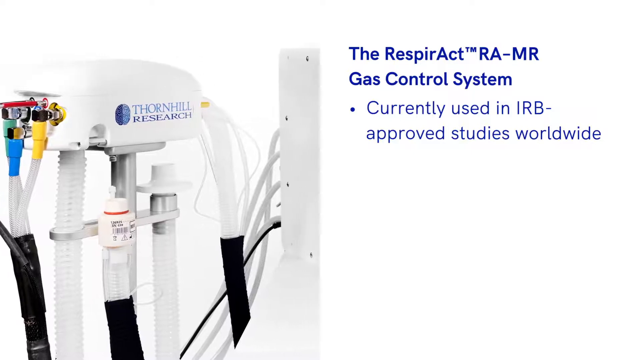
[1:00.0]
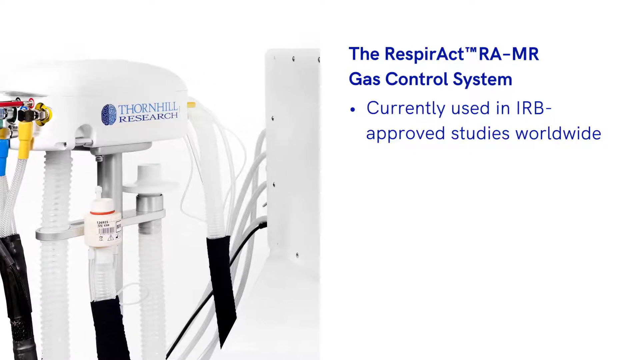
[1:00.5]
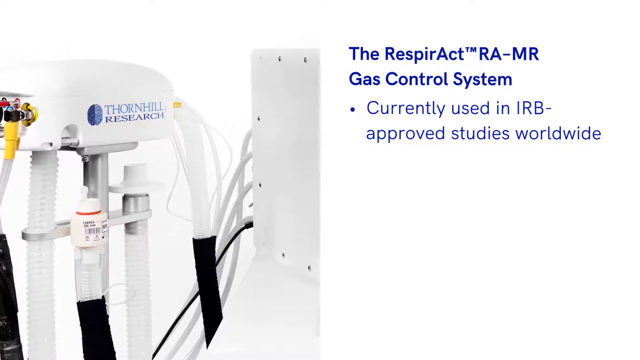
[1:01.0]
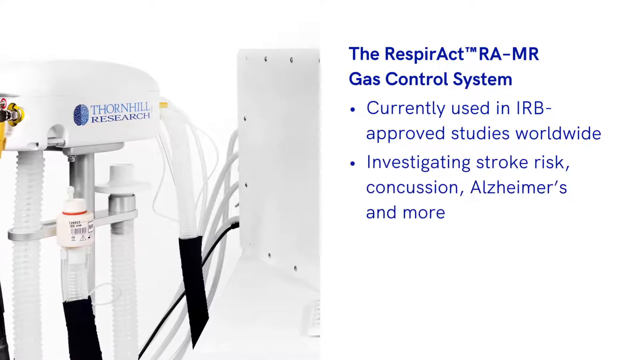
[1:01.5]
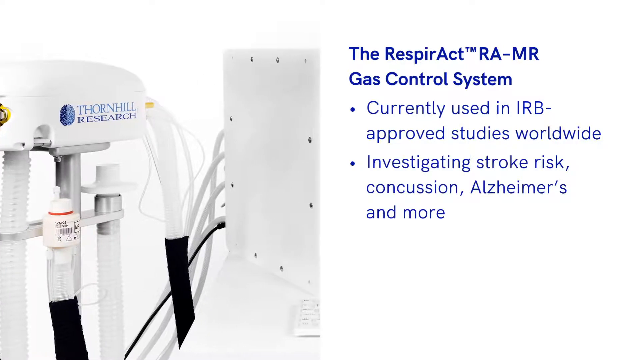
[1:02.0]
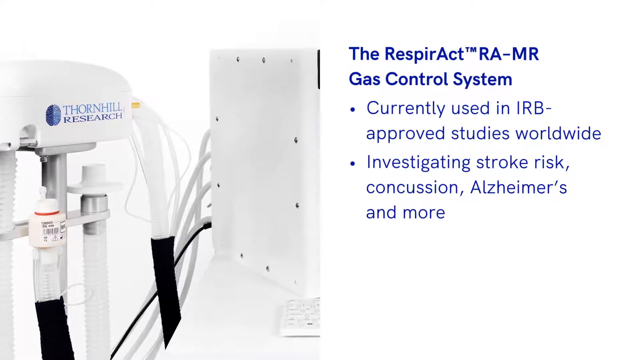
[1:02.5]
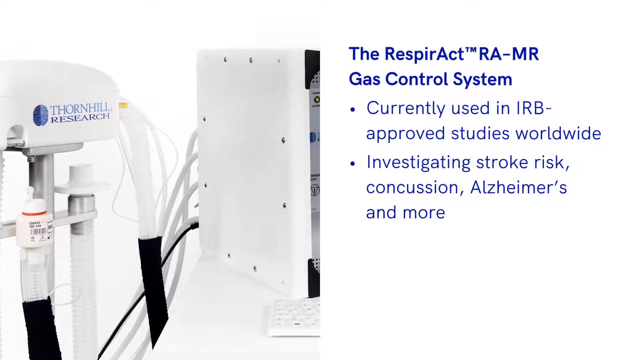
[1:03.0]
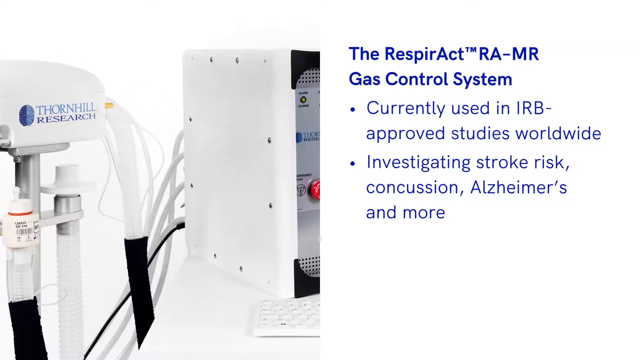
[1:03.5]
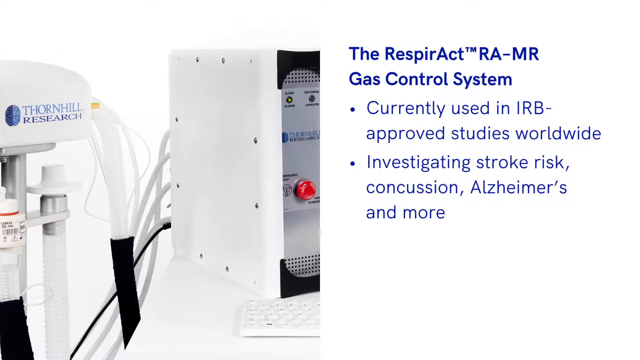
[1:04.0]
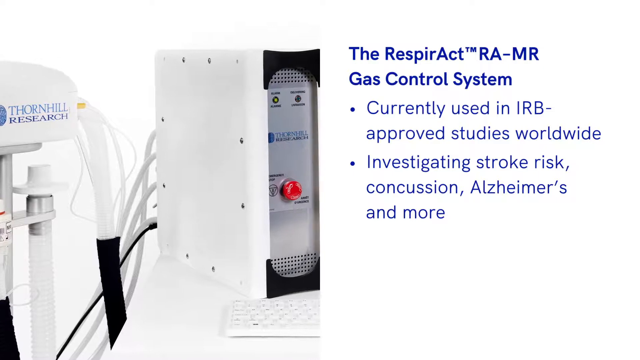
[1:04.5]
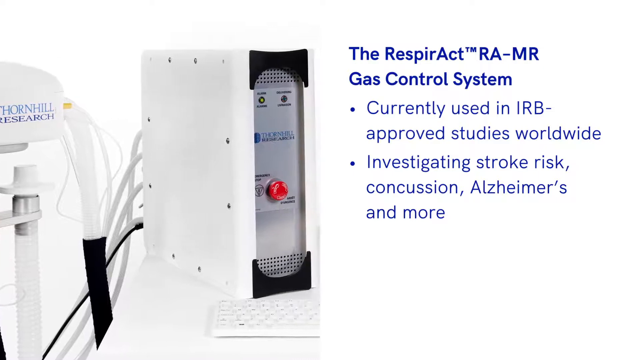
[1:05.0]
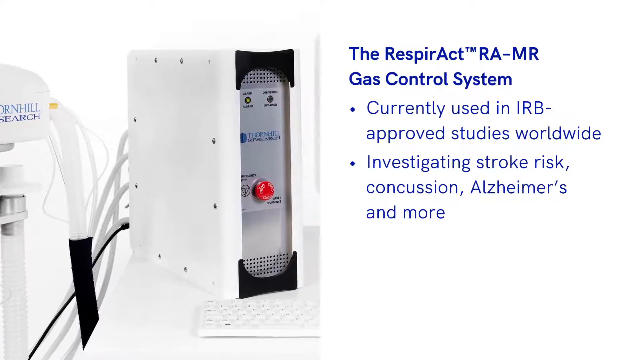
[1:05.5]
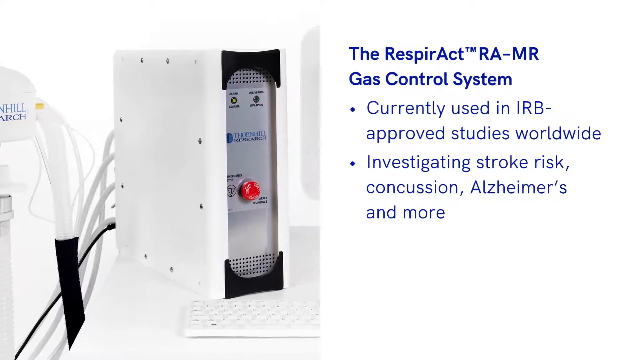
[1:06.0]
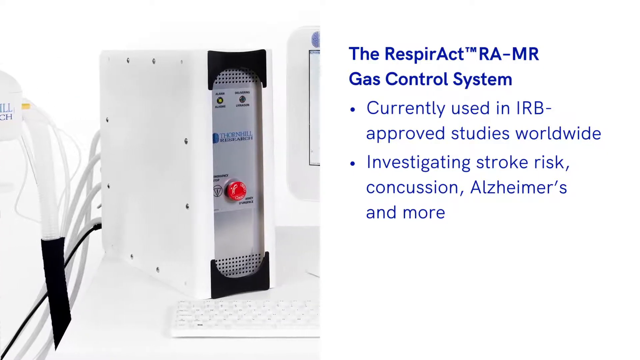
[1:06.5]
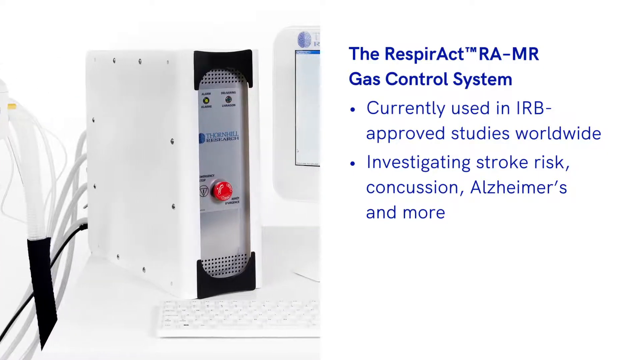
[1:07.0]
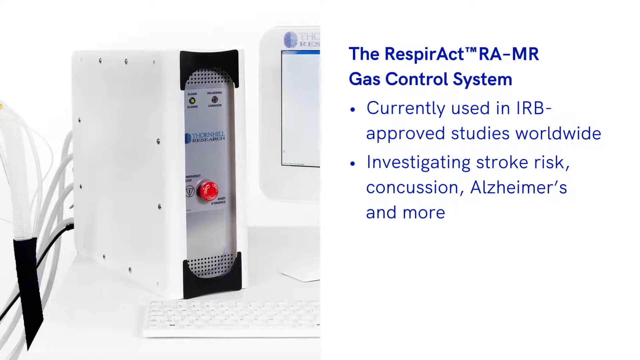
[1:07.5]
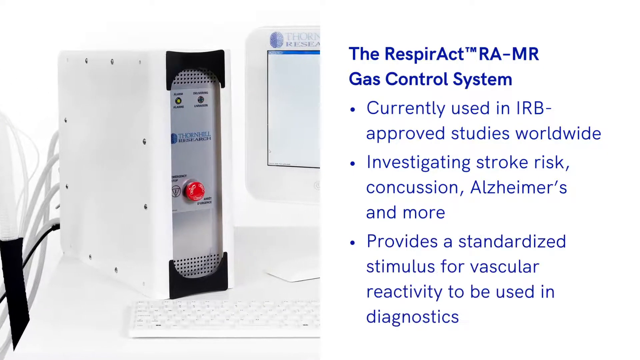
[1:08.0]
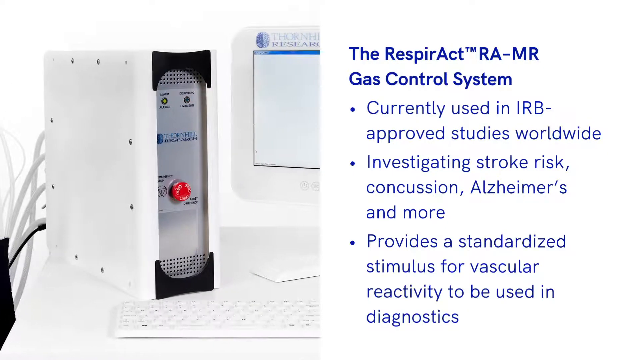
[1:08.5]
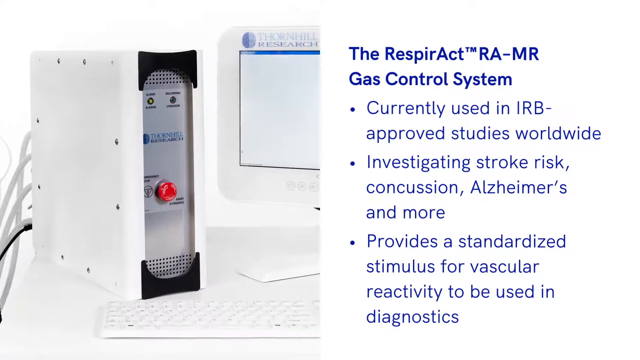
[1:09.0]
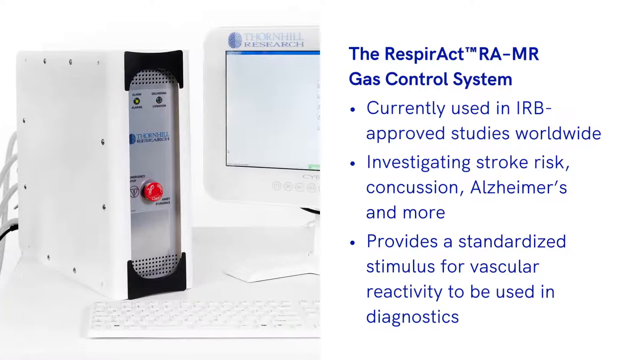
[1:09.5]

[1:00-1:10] On-screen text about the Thornhill Research Respiract RA-MR gas control system says it is "currently used in IRB approved studies worldwide," then "investigating stroke risk, concussion, Alzheimer's, and more," and then "provides a standardized stimulus for vascular reactivity to be used in diagnostics."